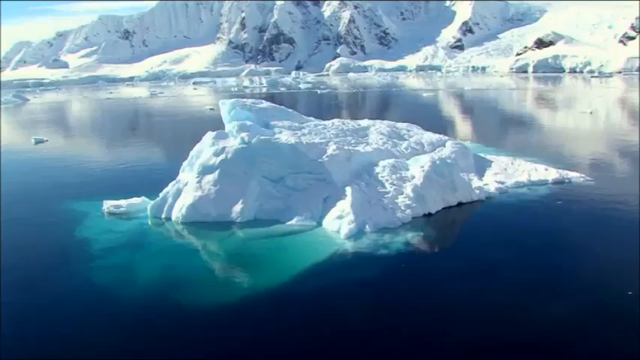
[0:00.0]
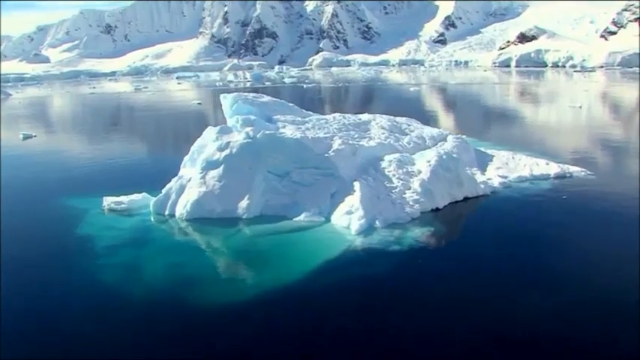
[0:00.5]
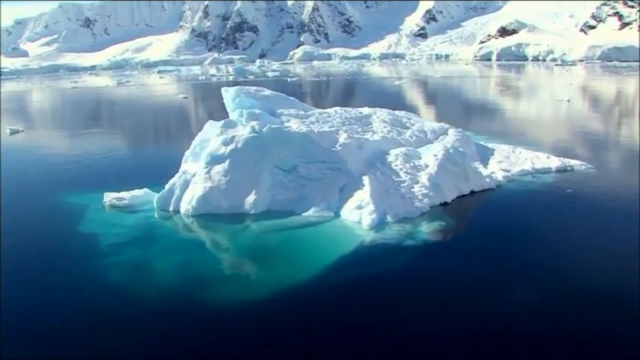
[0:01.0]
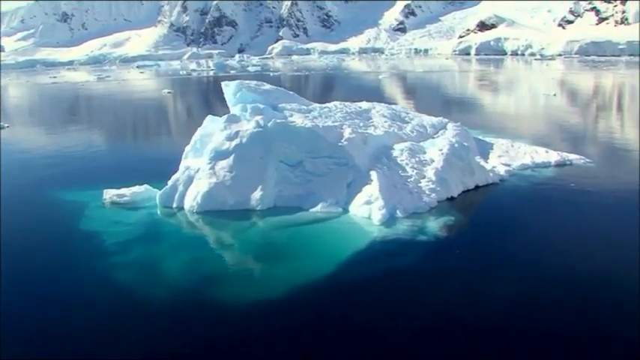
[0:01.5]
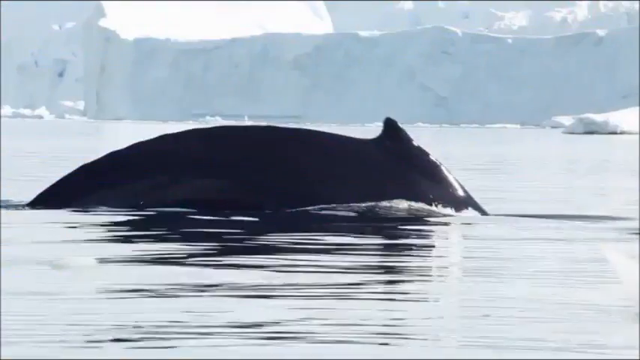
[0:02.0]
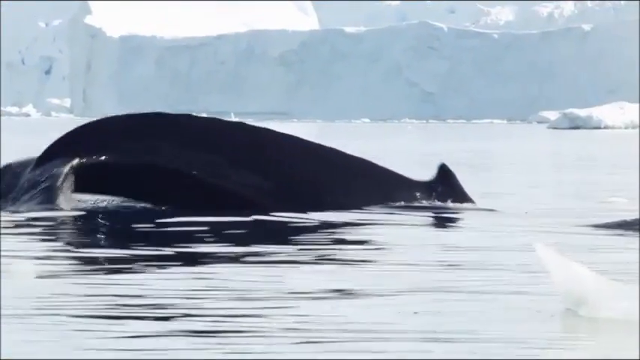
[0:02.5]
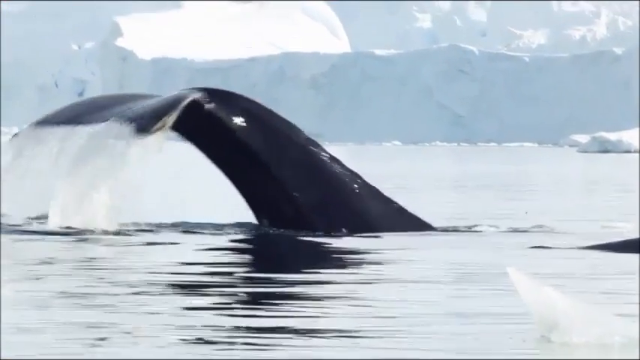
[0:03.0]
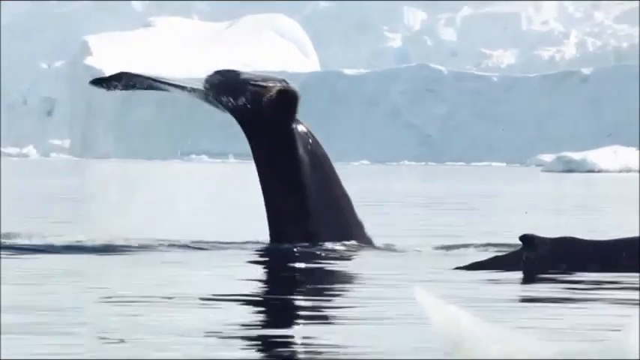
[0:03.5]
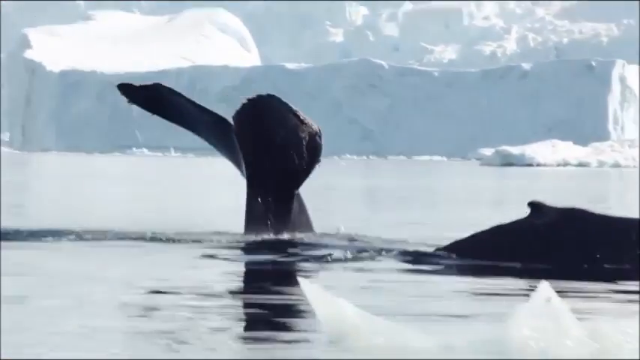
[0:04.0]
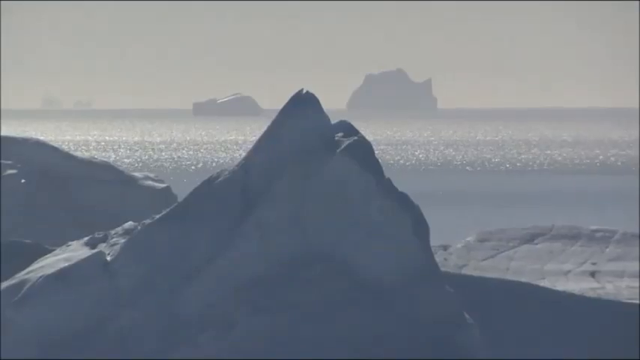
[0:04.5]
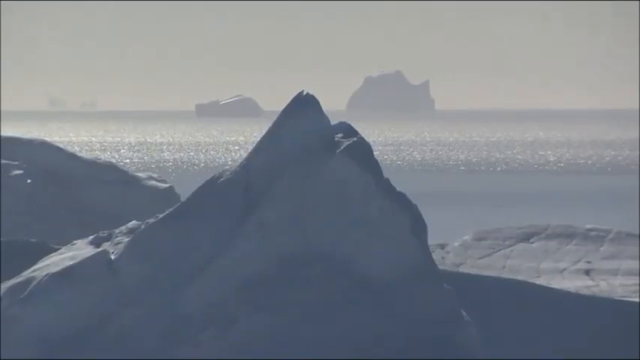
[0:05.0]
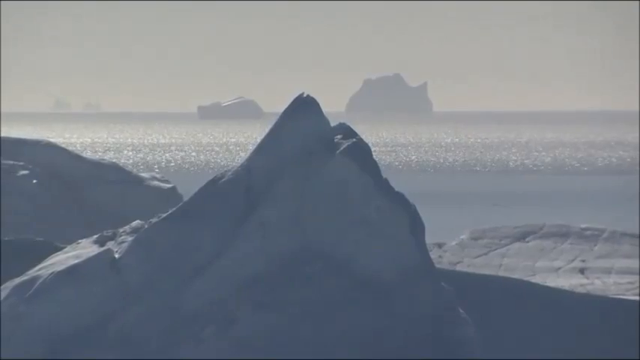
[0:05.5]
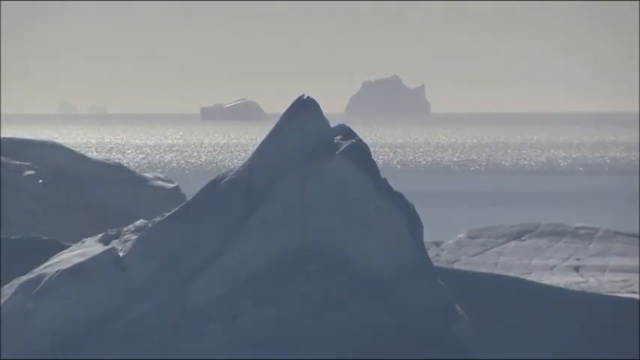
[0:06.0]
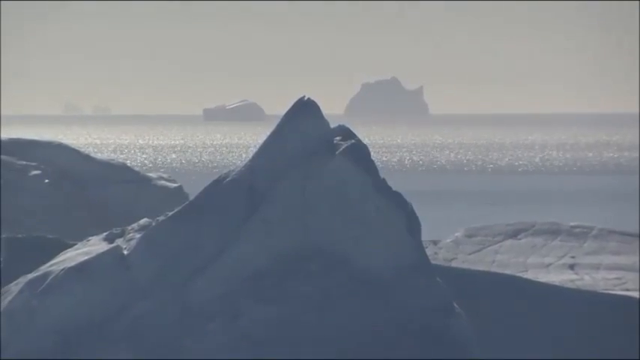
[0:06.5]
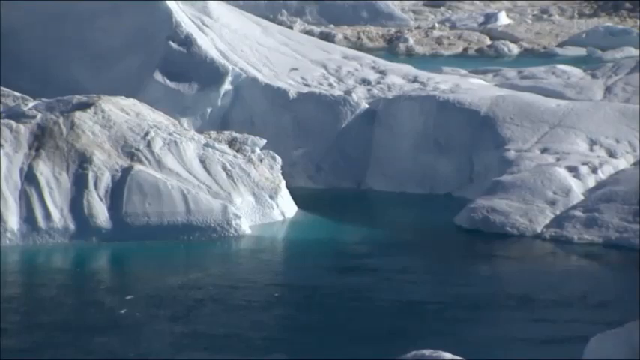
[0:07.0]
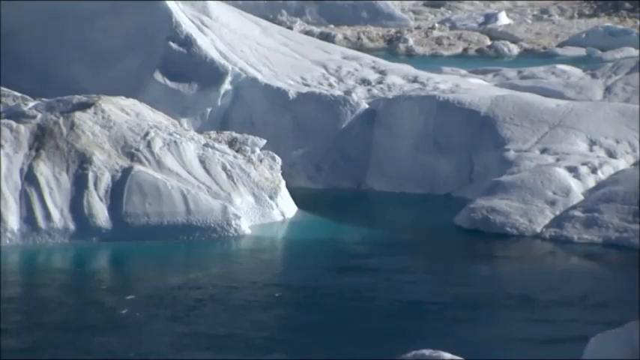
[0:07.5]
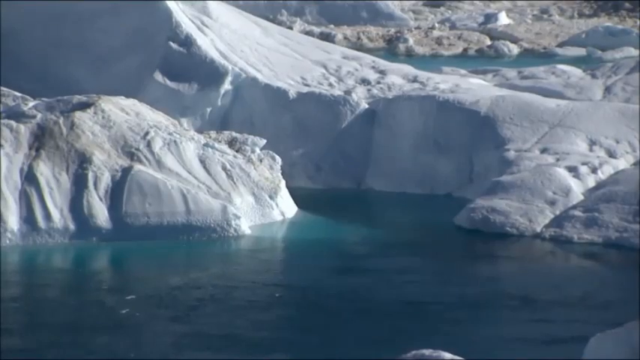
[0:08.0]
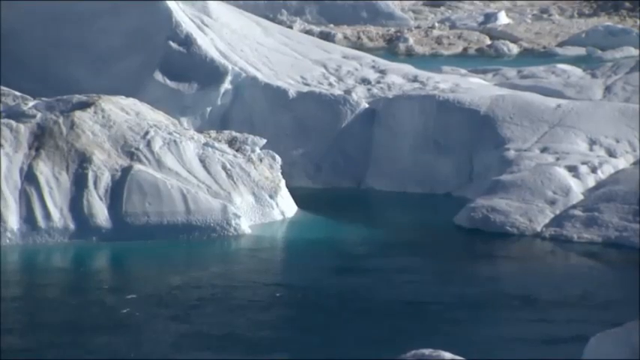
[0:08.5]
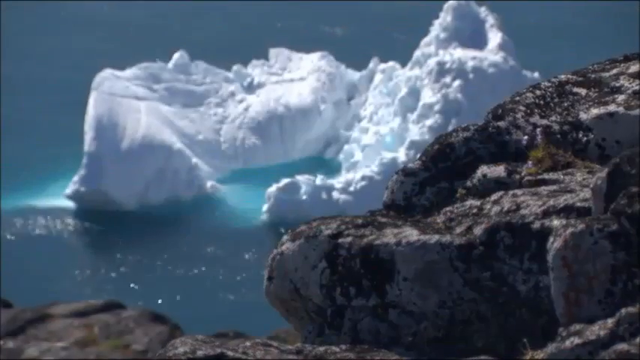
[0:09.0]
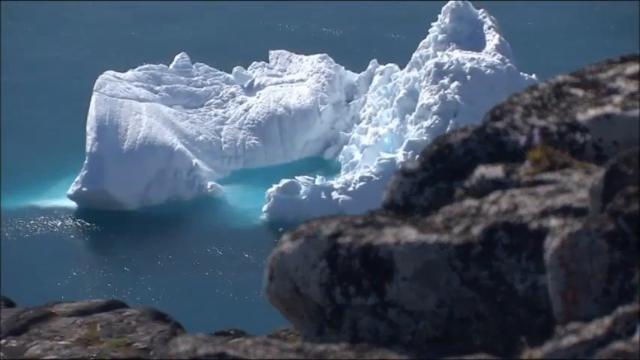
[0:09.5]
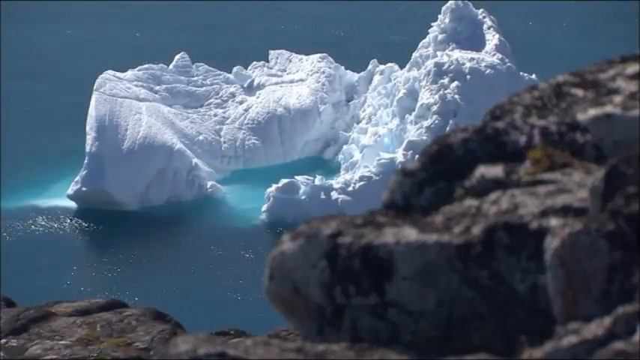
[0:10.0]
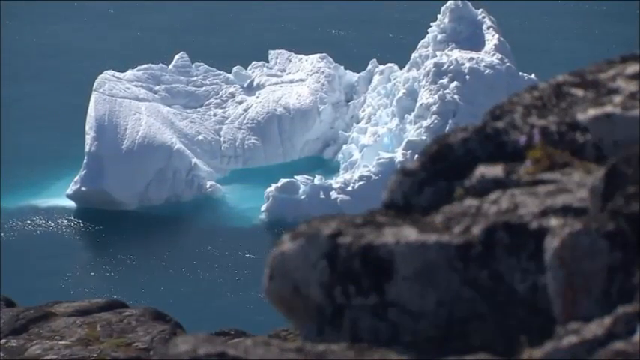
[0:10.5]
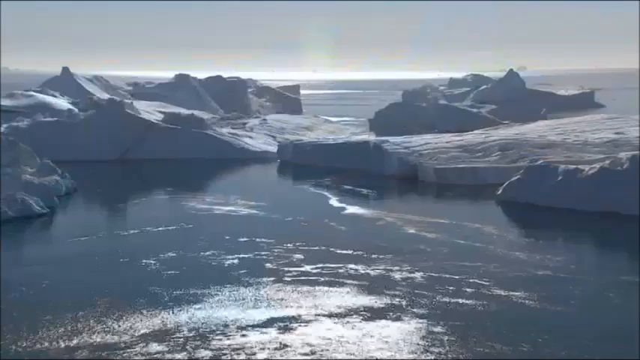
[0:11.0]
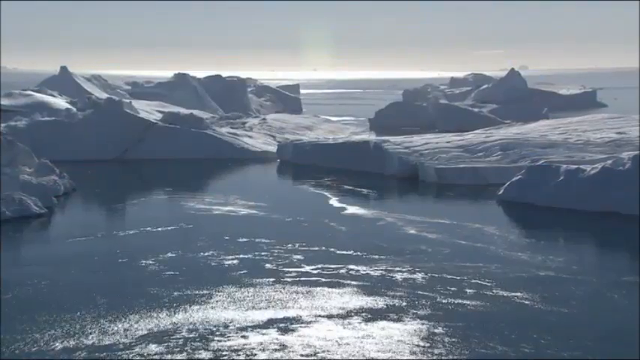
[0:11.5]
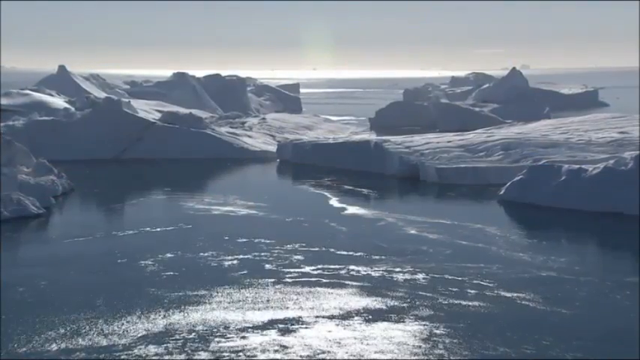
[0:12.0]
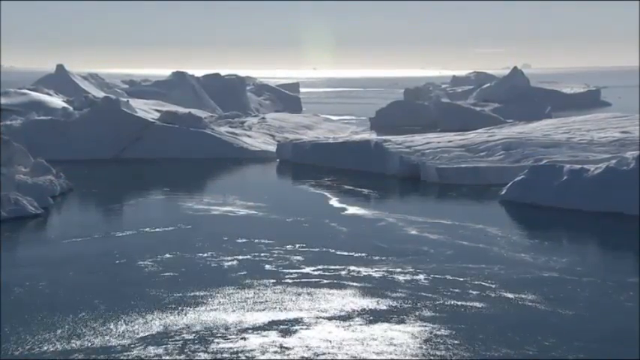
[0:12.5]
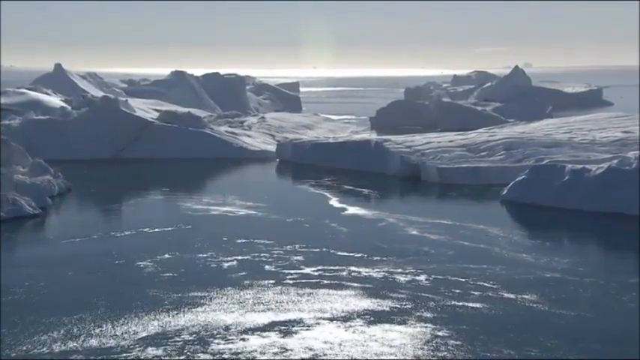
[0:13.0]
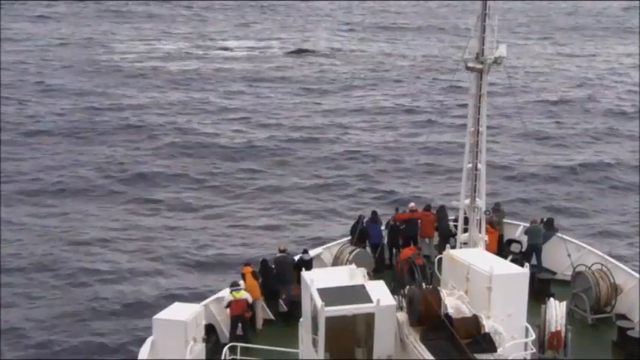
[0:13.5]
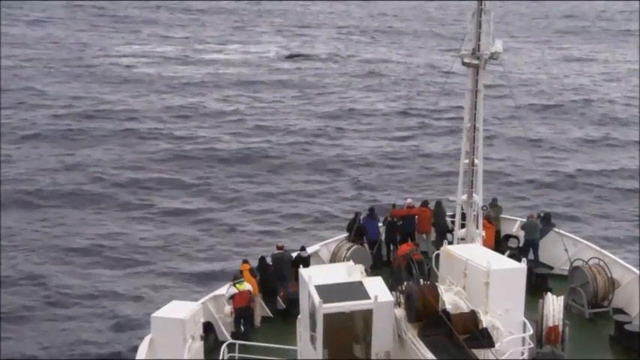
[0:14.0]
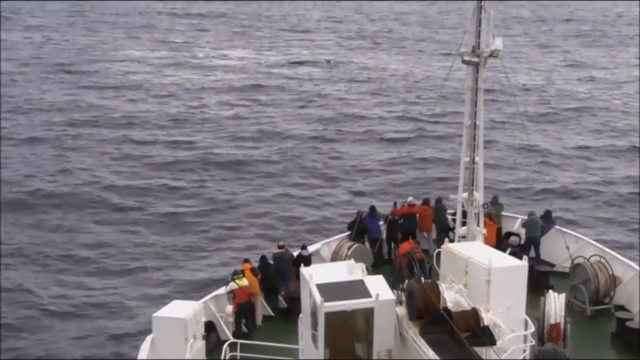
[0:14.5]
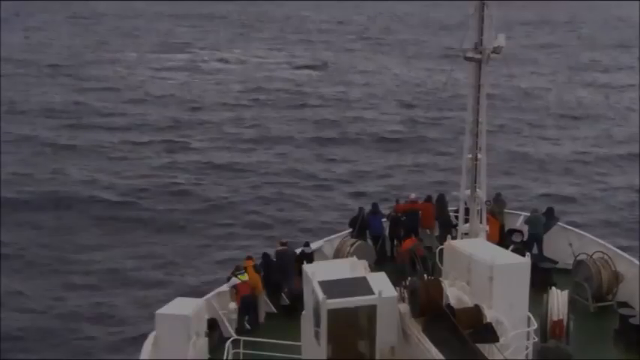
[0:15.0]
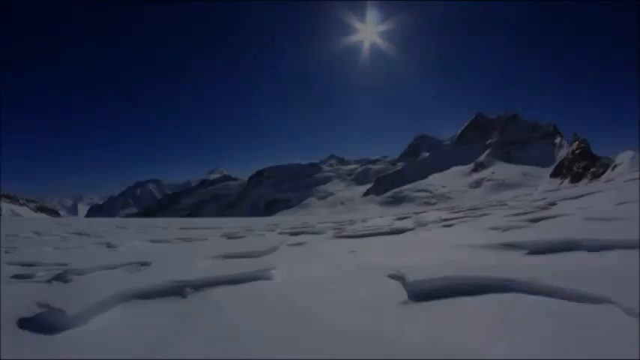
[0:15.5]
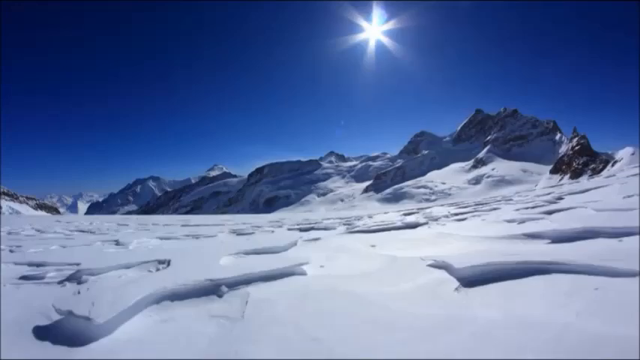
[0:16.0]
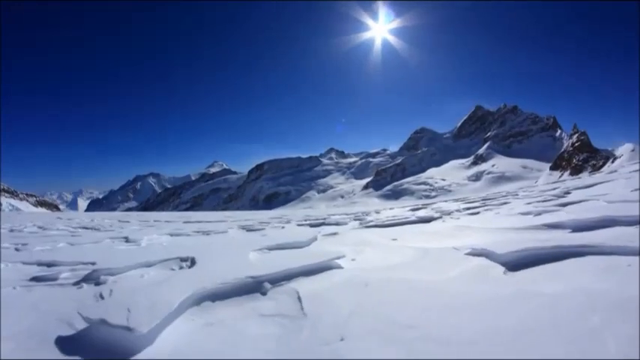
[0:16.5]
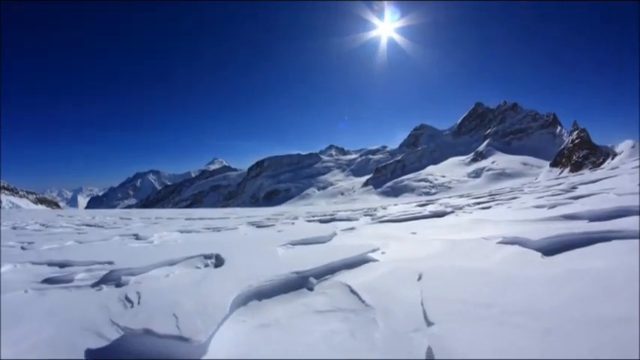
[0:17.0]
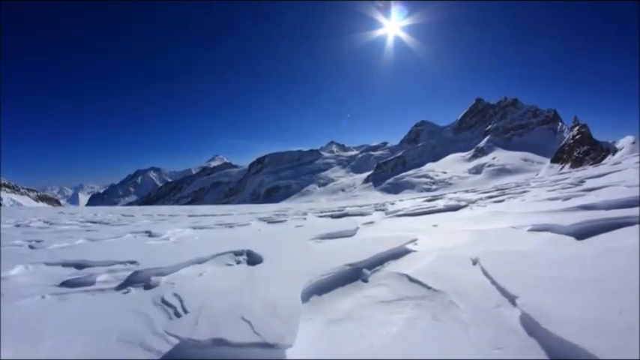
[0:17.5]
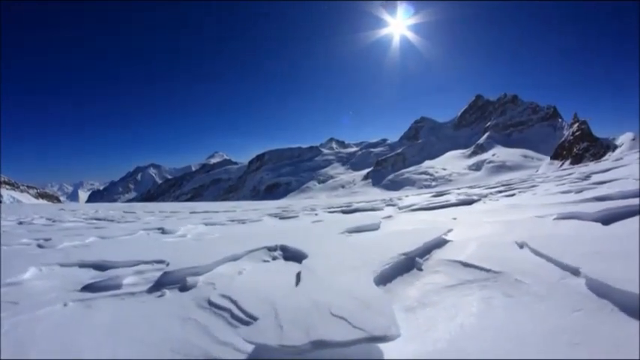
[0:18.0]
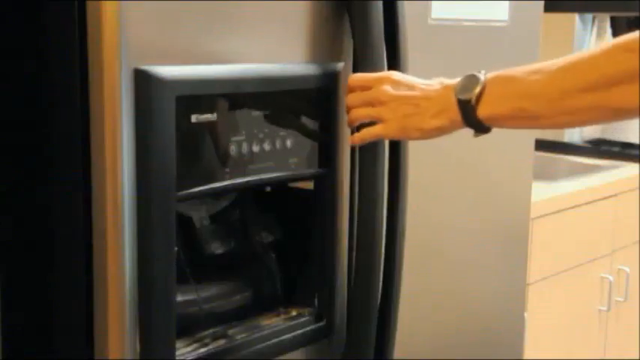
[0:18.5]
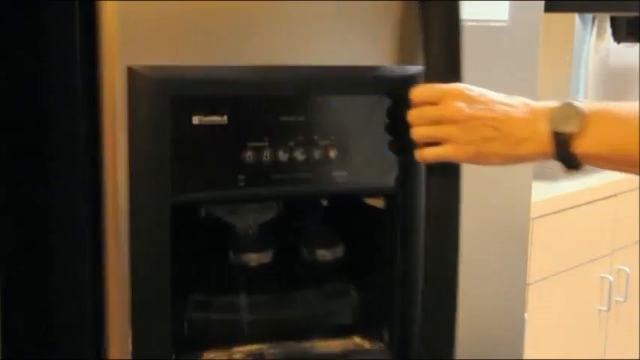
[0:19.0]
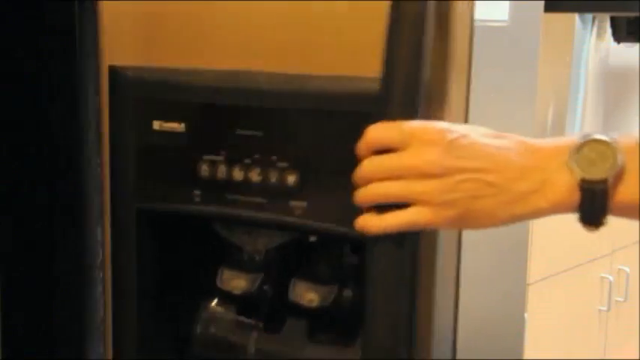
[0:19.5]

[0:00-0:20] A glacier rises out of a calm, blue, glassy ocean and is reflected in the water, with another glacier behind it. A whale surfaces and then dives back under the water. More glaciers appear in the ocean, with mist-filled air, seabirds flying overhead, the water glistening in the sunlight and pure white snow. The scene cuts to a dimmer shot of a large boat with many people standing at the helm; it looks as if something was just touching the surface of the water out ahead of it. Next comes snow-covered ground with hills in the background, a deep blue sky and the sun. The video then cuts to a man's hand, with a black and gold wristwatch on his wrist, opening a refrigerator door.